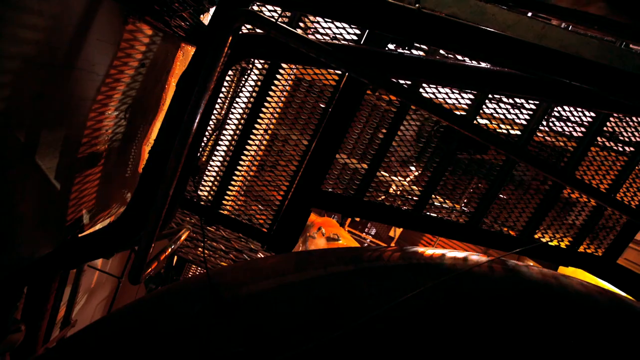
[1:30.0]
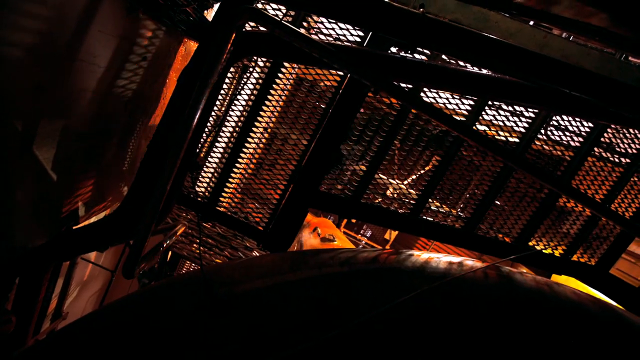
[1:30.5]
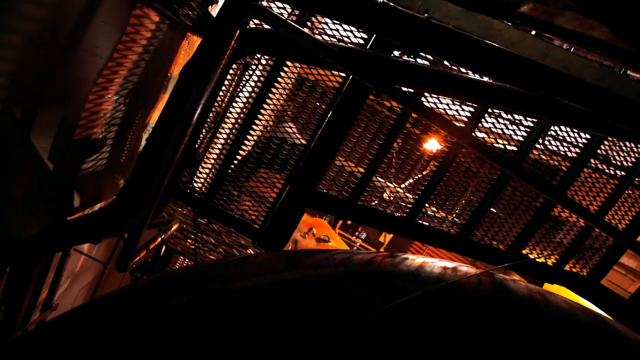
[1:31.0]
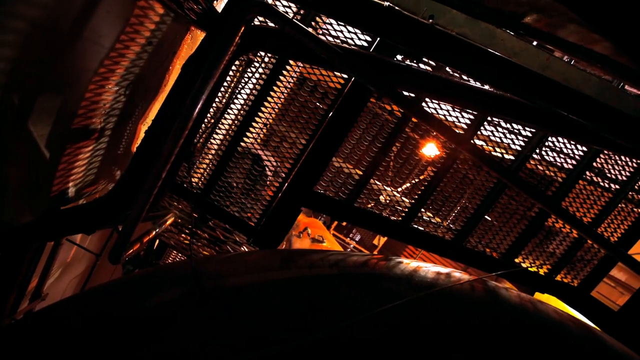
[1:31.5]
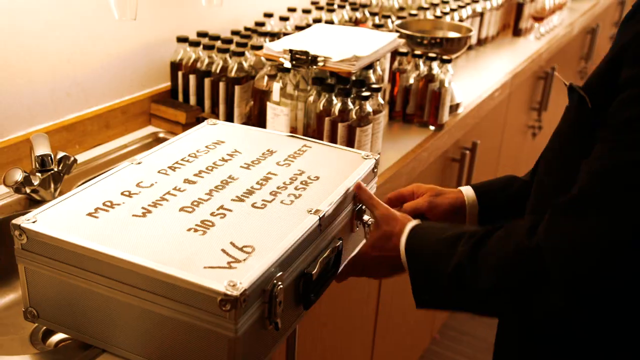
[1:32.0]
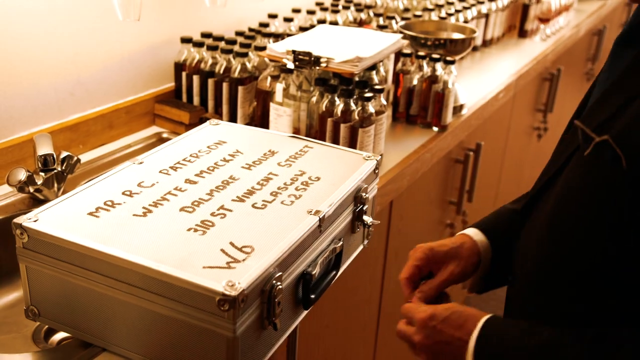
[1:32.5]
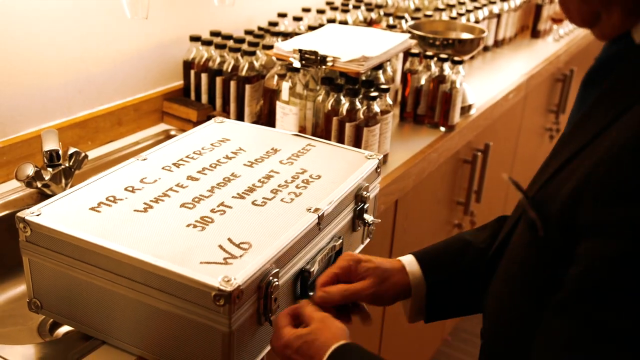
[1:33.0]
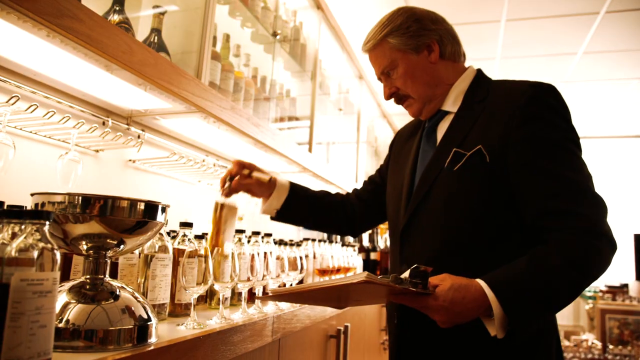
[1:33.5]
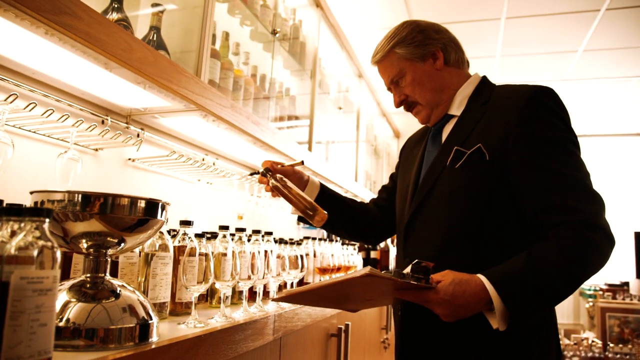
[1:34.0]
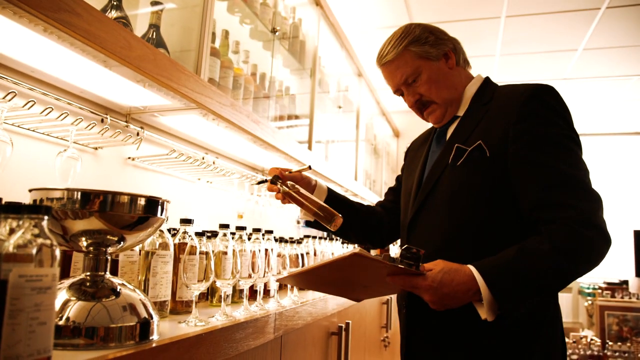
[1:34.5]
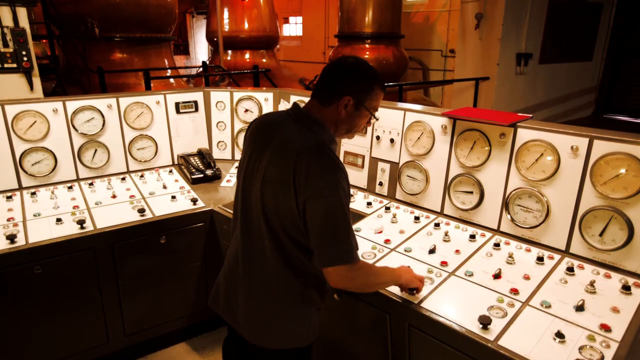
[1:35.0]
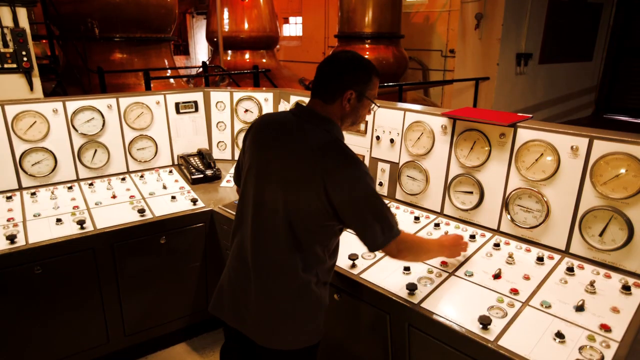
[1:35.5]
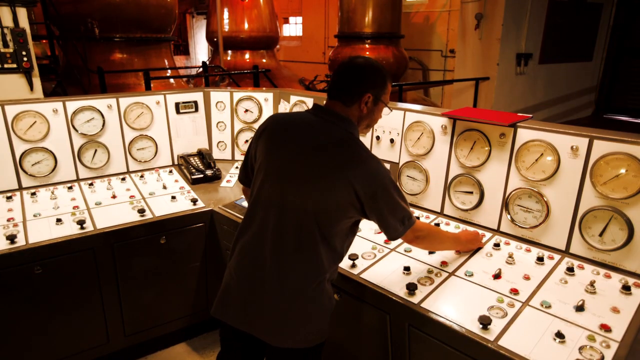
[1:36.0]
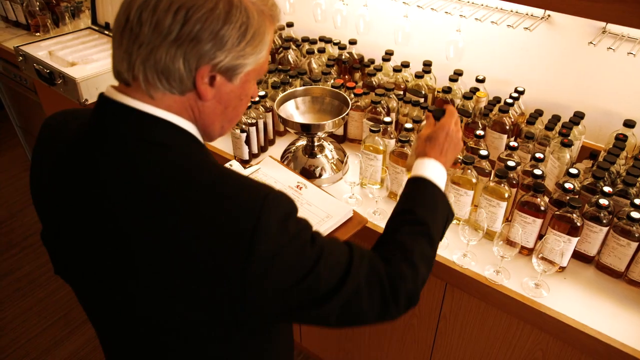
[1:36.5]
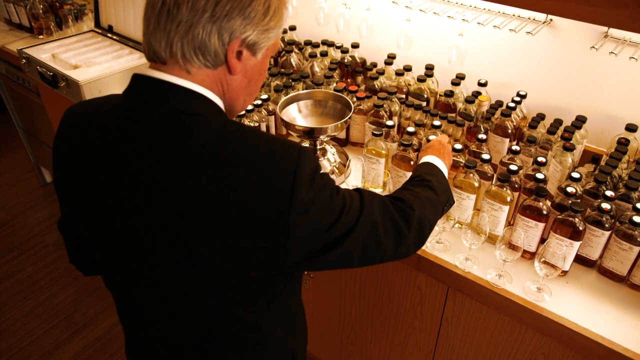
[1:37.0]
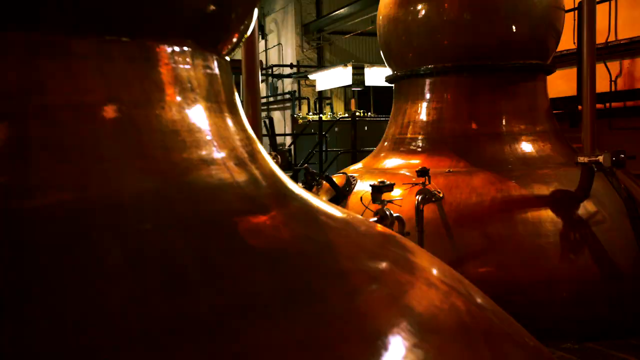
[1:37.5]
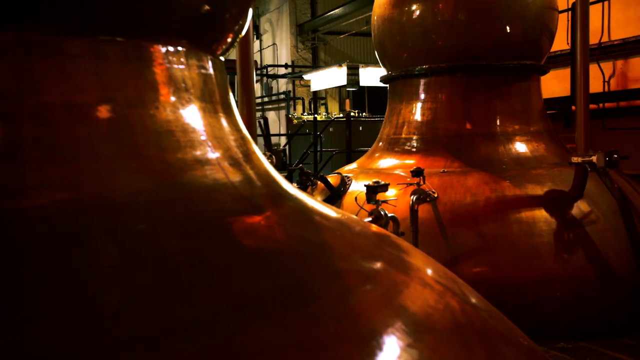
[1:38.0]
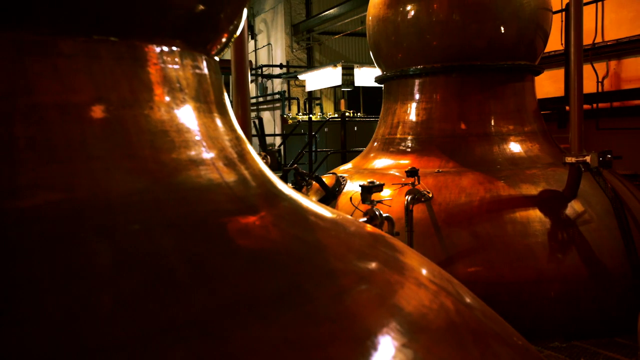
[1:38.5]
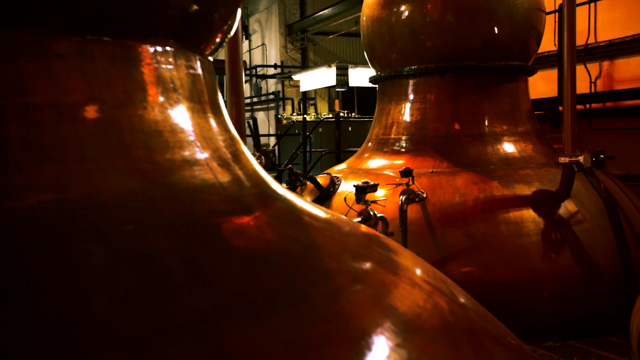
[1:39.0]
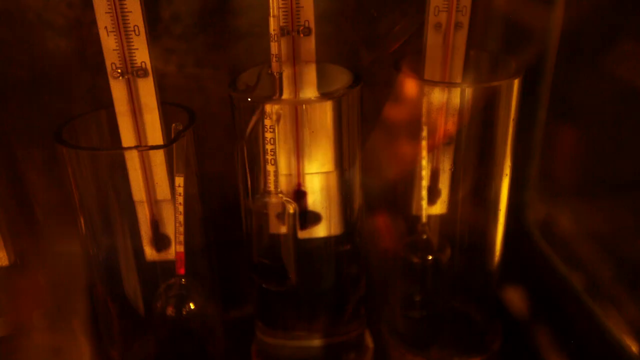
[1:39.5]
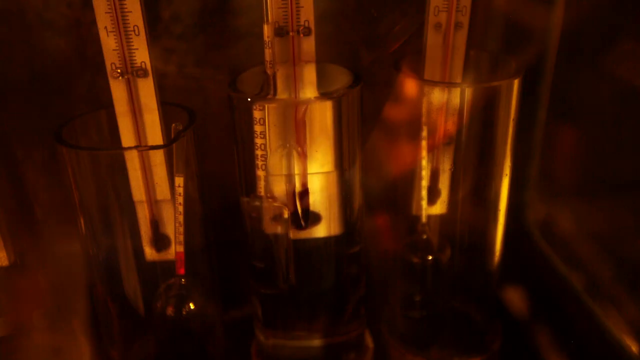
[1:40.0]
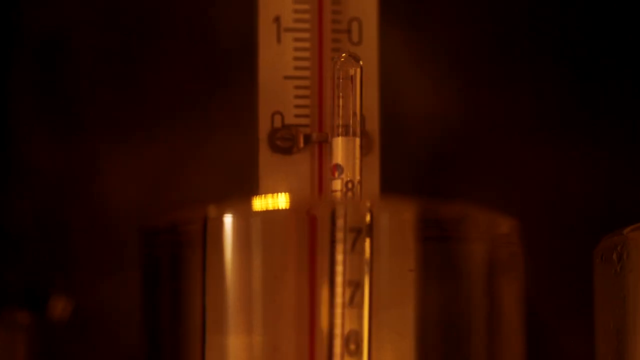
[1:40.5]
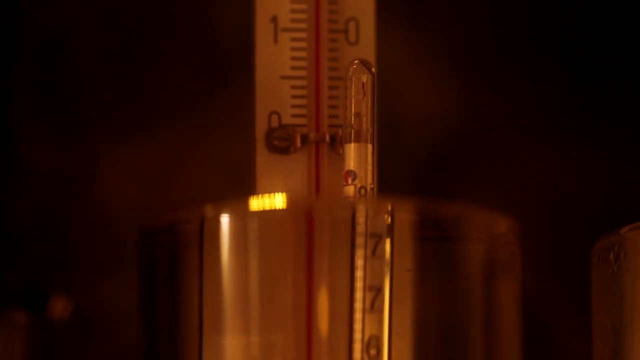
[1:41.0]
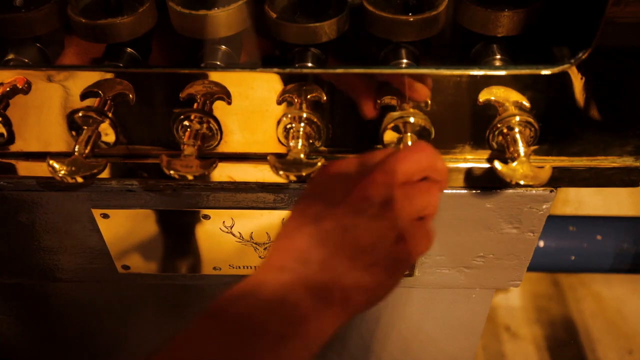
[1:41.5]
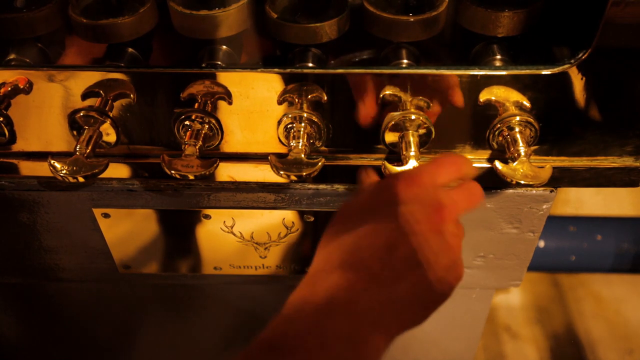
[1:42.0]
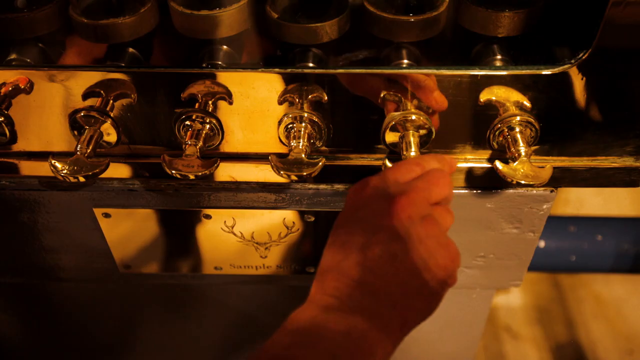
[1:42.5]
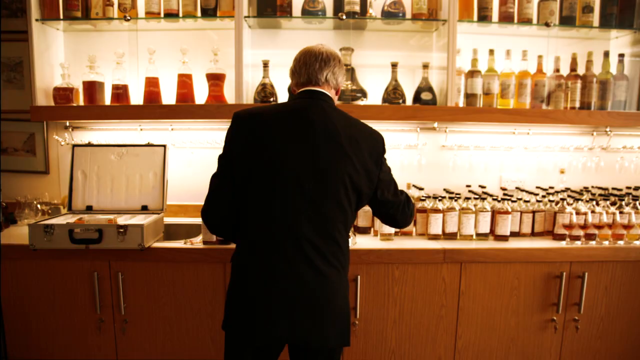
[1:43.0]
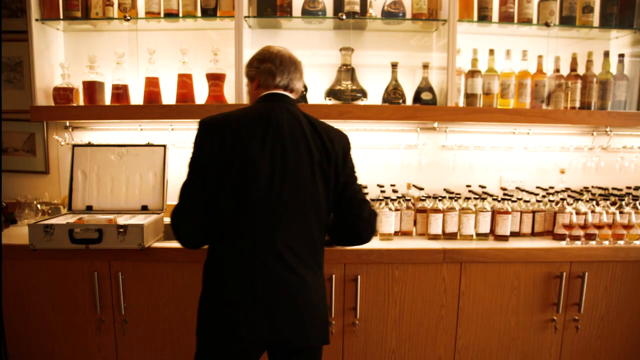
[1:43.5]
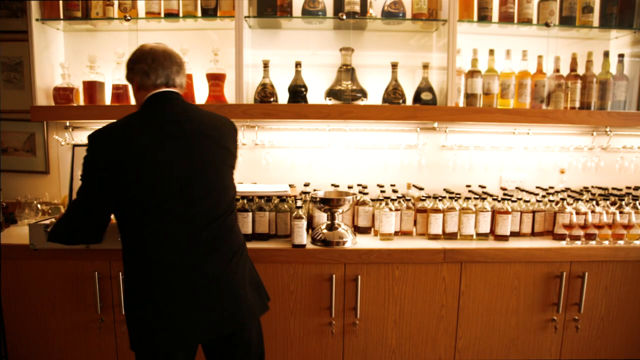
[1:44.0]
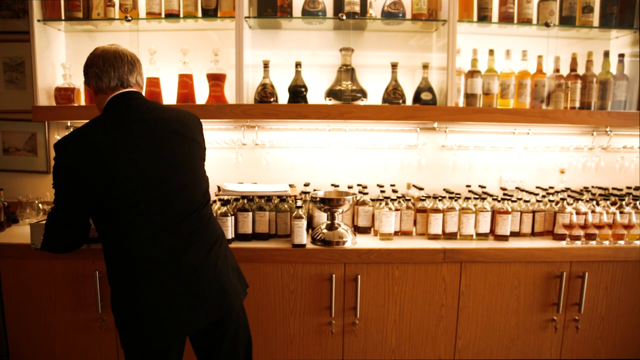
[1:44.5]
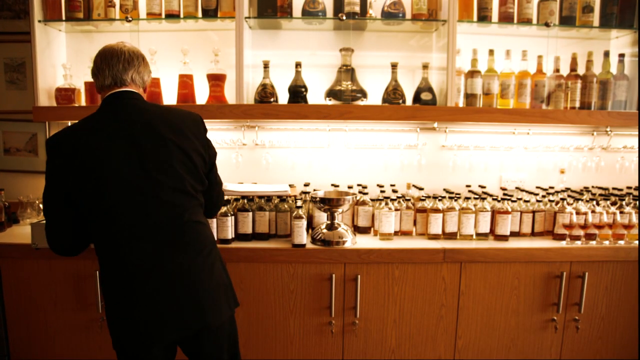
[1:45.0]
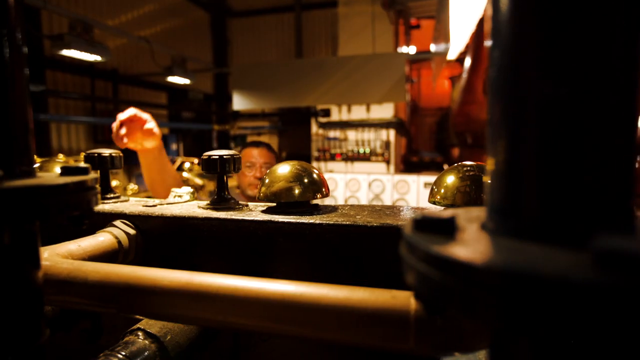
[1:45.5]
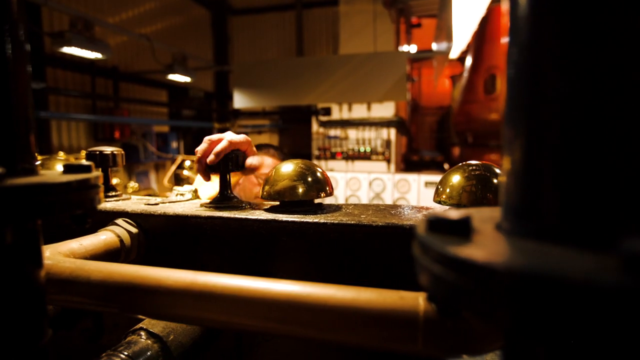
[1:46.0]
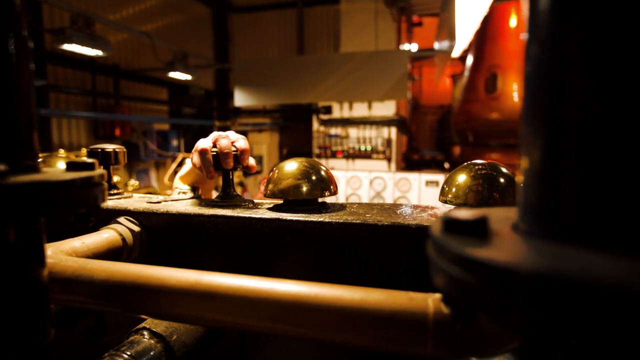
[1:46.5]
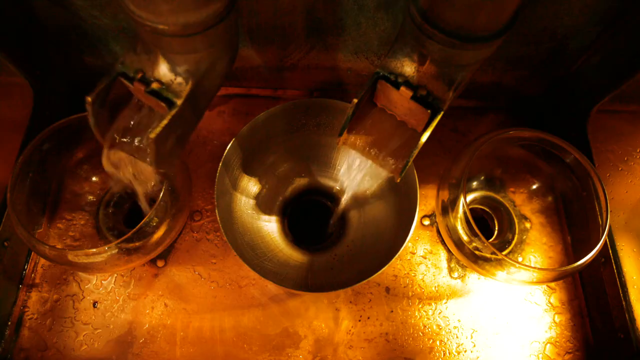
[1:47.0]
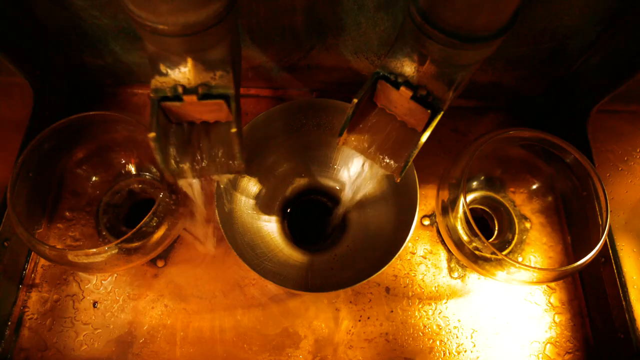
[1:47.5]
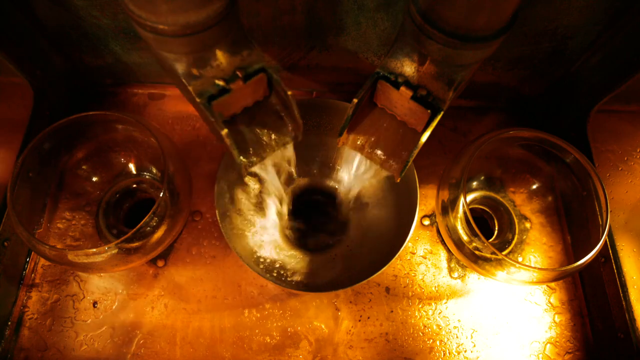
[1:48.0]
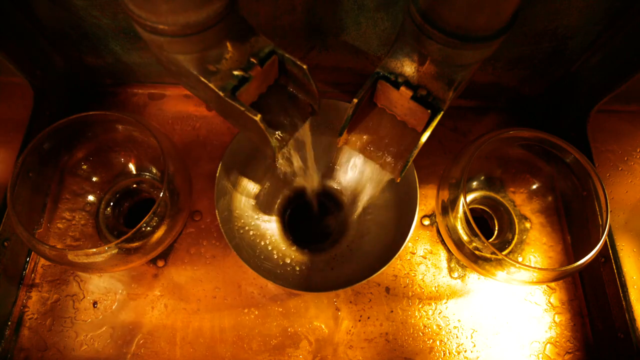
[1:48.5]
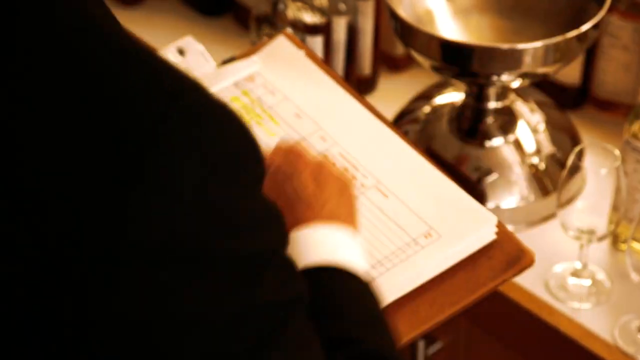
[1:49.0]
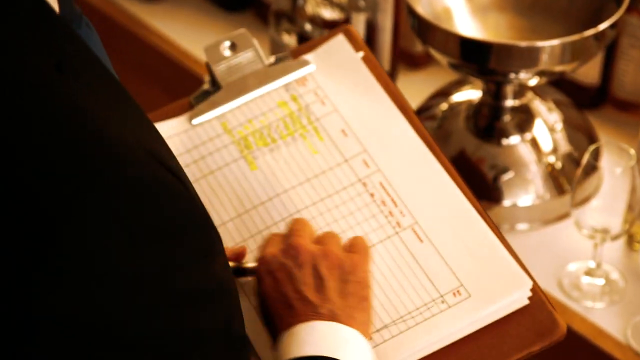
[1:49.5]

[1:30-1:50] The tasting takes place in the testing room. Oak barrels are shown, some of them charred and some not.